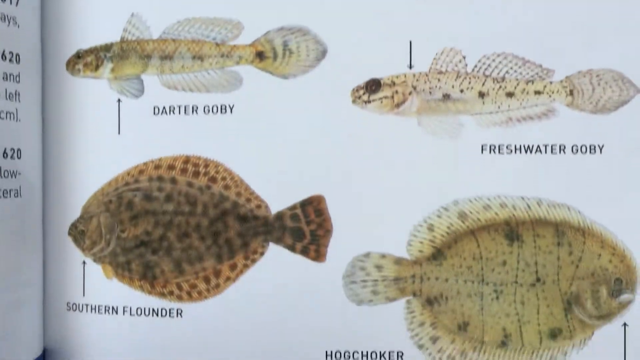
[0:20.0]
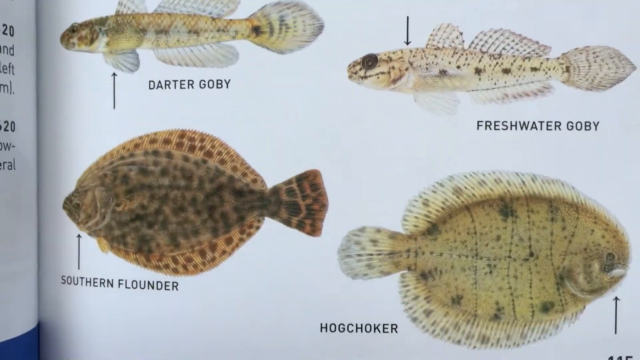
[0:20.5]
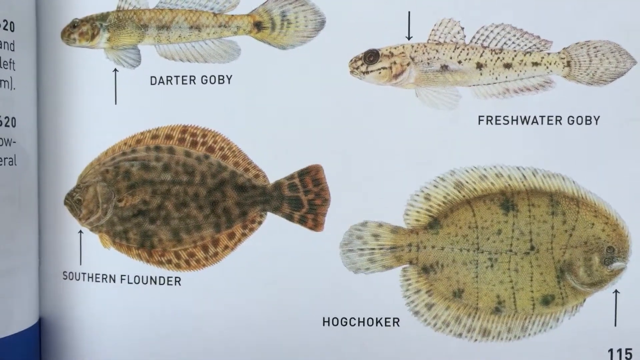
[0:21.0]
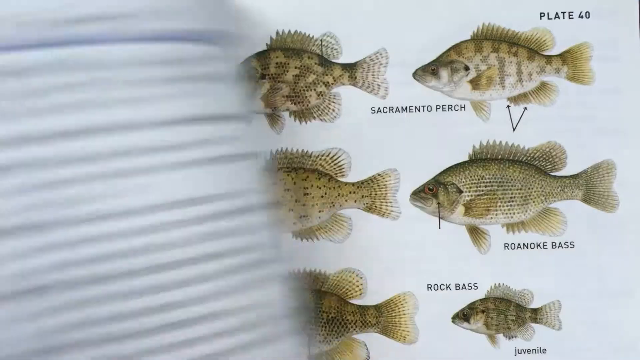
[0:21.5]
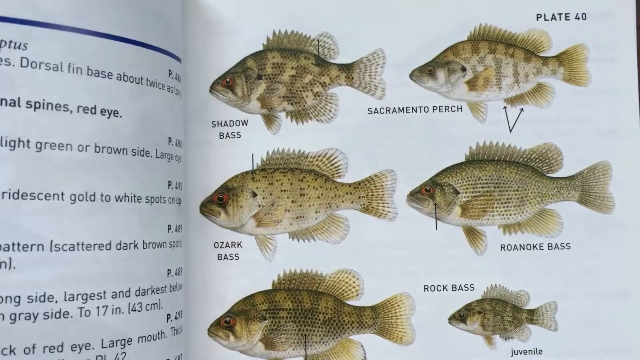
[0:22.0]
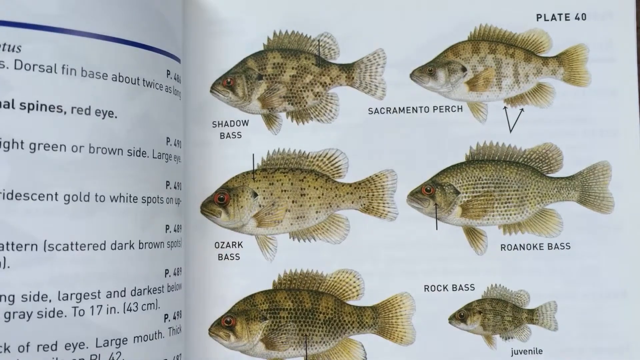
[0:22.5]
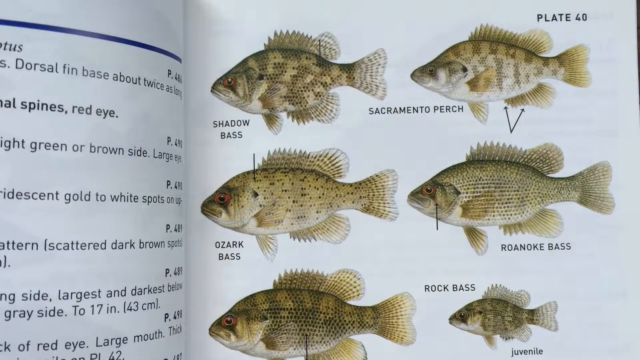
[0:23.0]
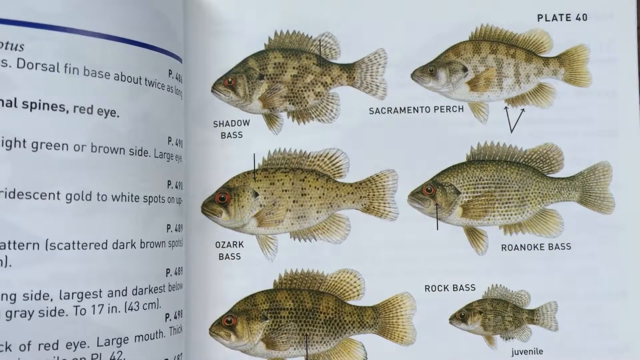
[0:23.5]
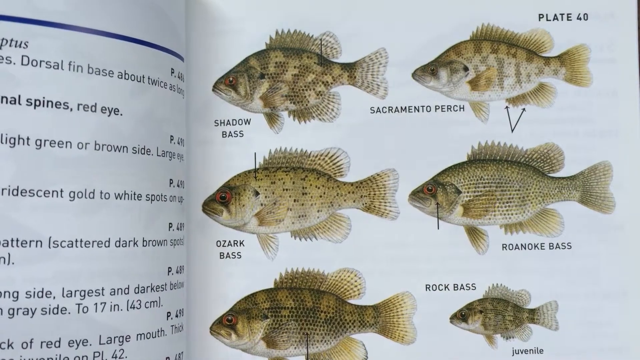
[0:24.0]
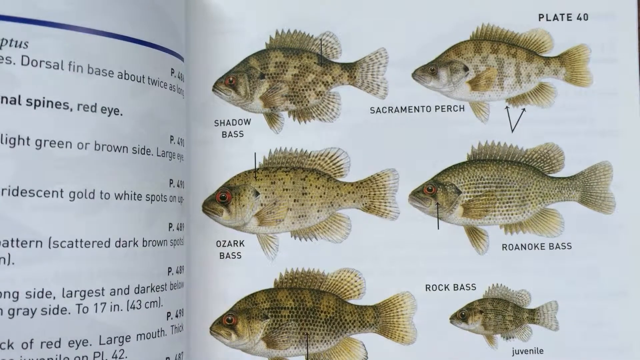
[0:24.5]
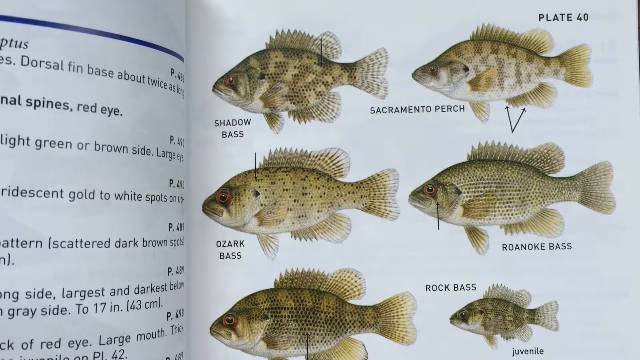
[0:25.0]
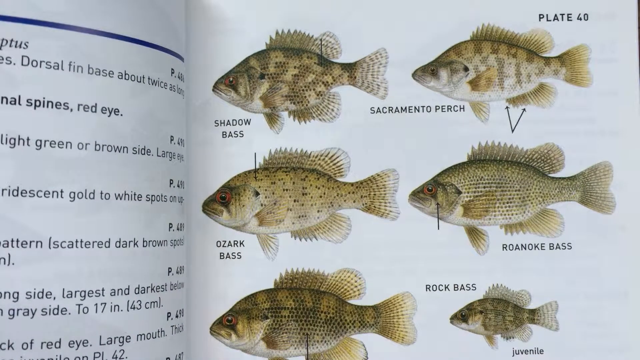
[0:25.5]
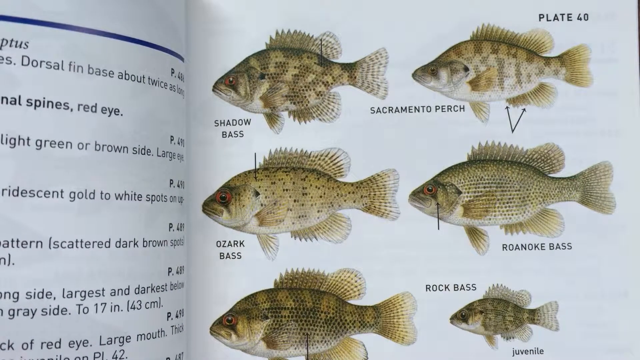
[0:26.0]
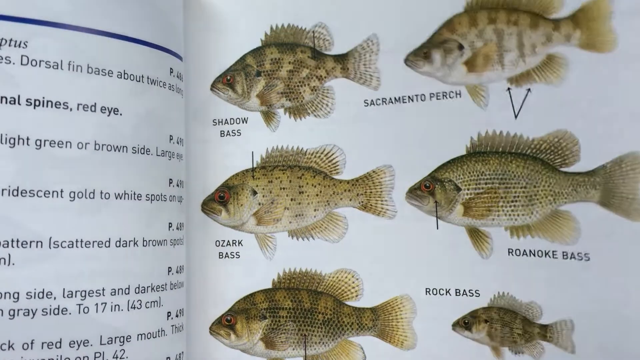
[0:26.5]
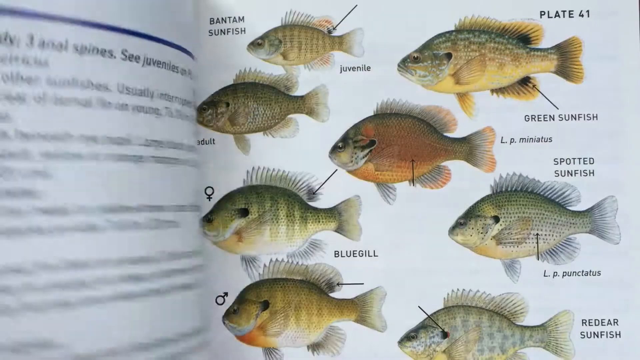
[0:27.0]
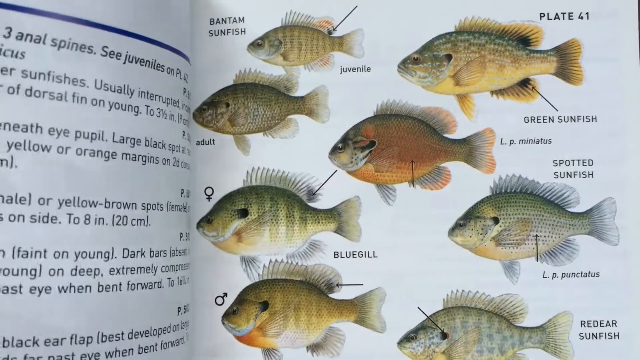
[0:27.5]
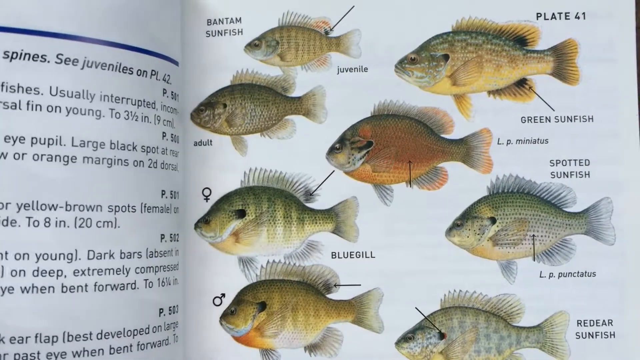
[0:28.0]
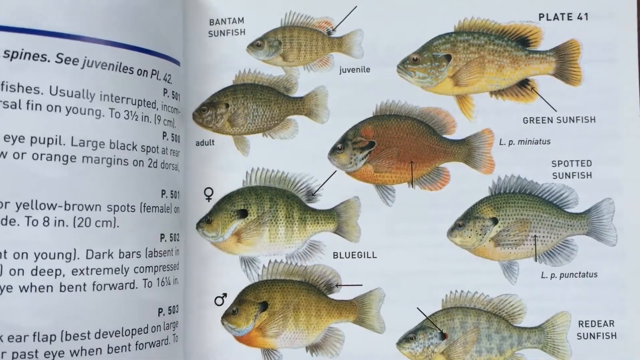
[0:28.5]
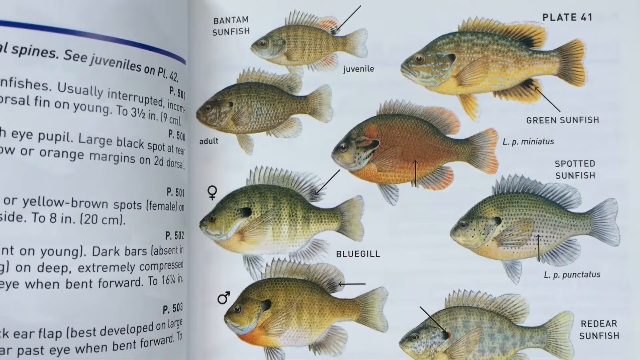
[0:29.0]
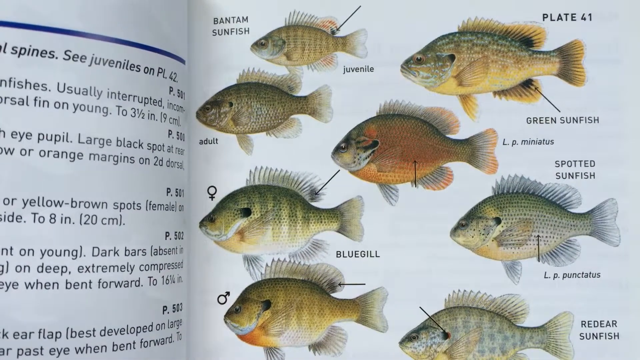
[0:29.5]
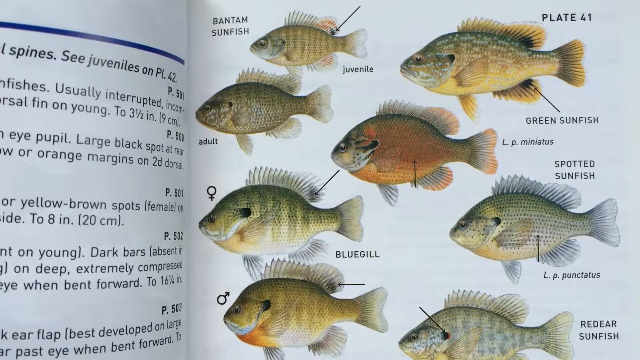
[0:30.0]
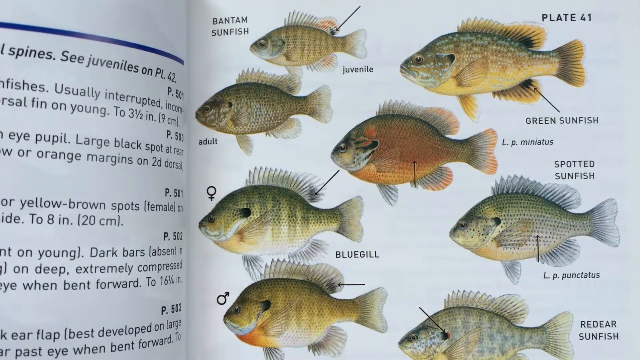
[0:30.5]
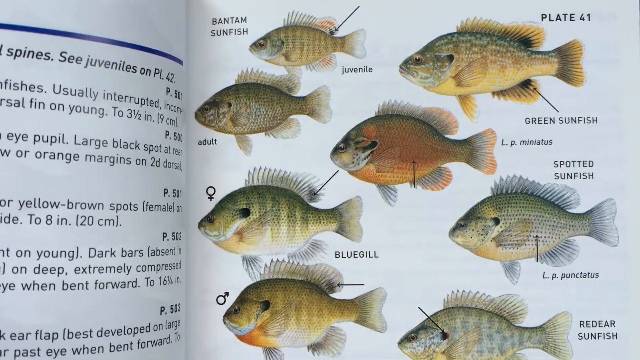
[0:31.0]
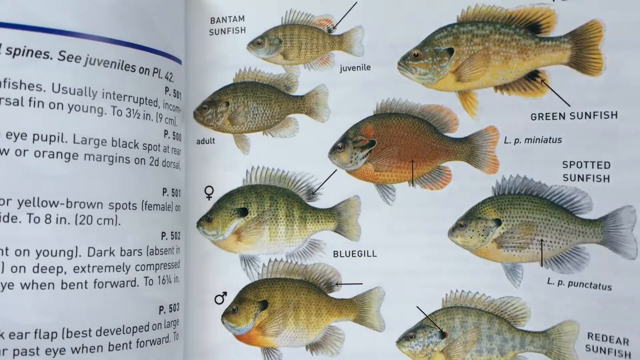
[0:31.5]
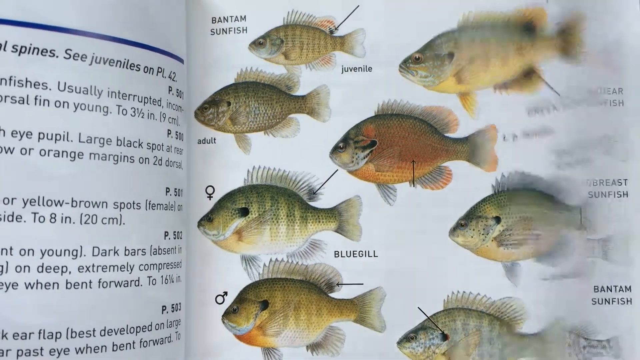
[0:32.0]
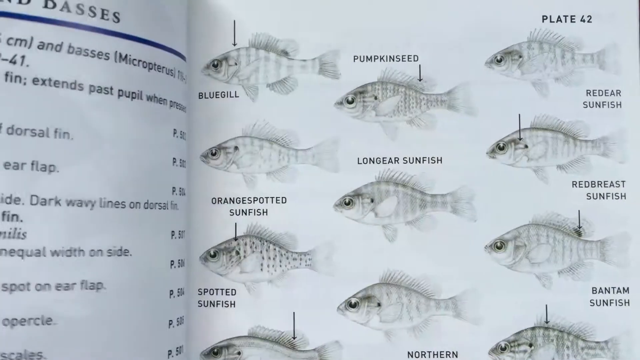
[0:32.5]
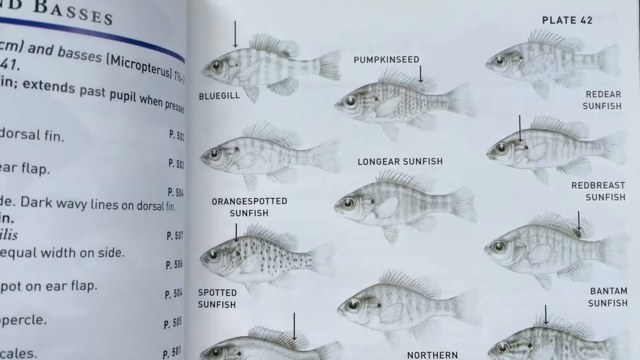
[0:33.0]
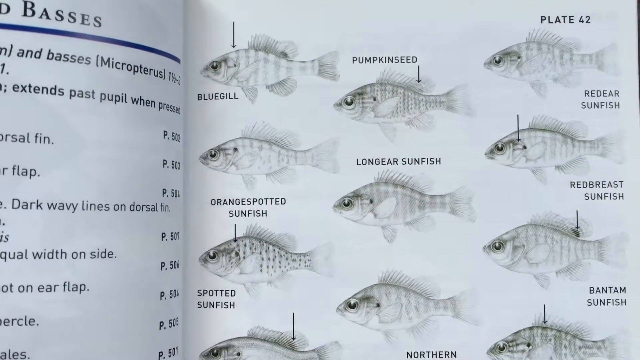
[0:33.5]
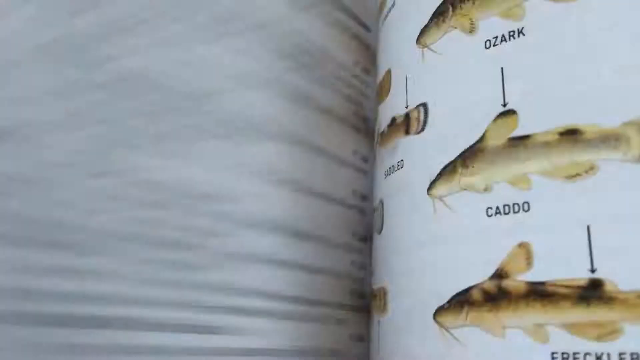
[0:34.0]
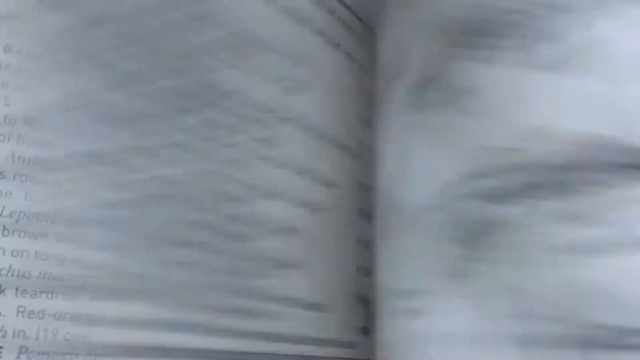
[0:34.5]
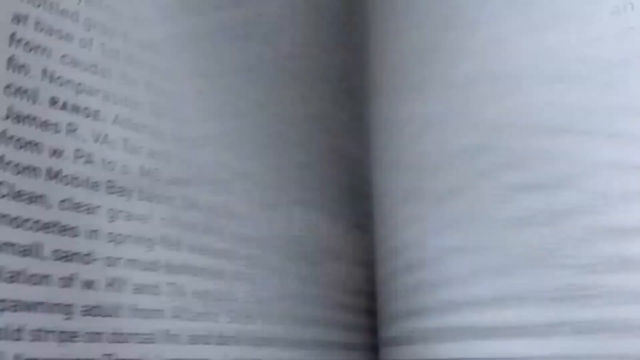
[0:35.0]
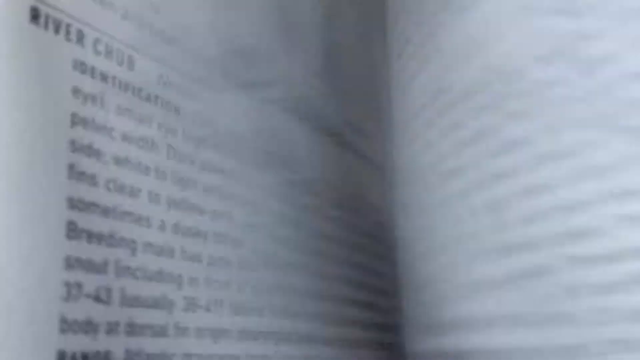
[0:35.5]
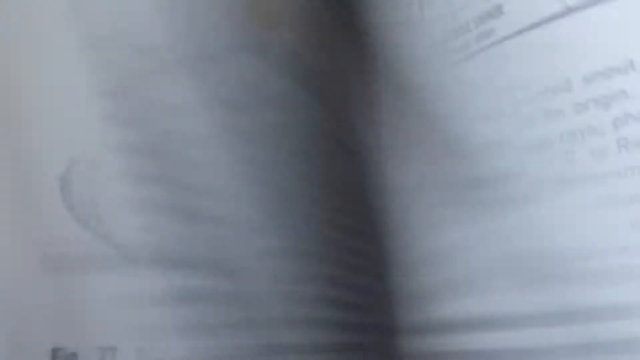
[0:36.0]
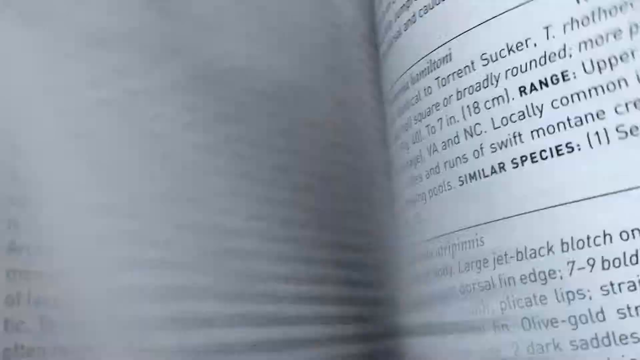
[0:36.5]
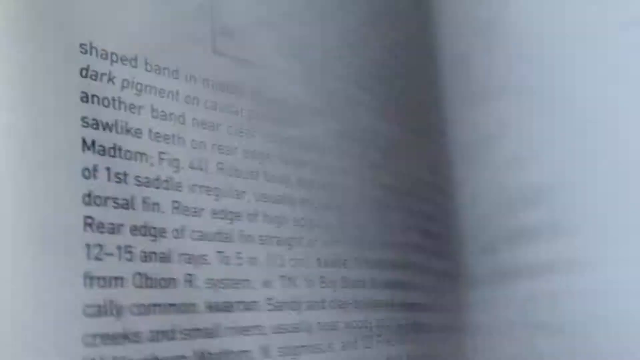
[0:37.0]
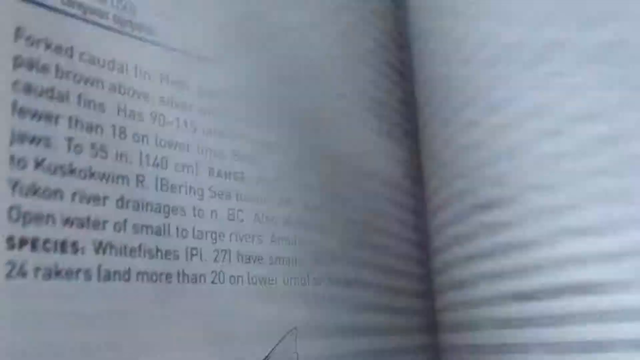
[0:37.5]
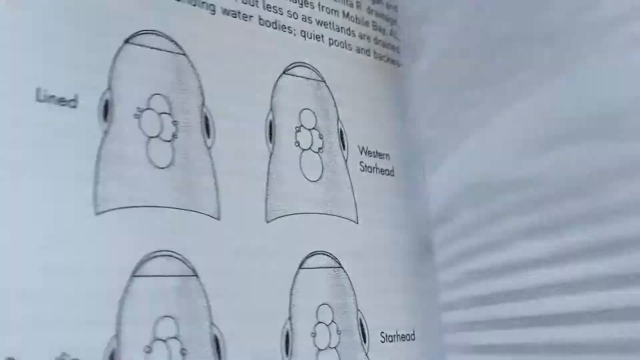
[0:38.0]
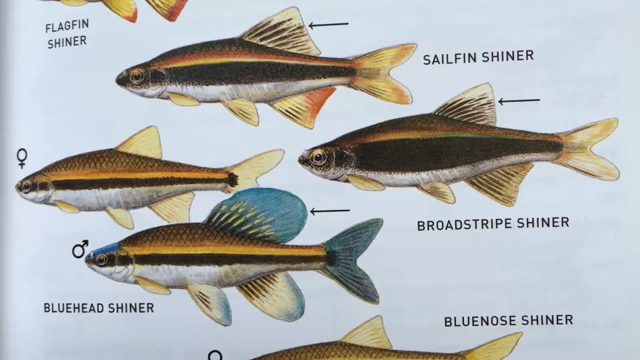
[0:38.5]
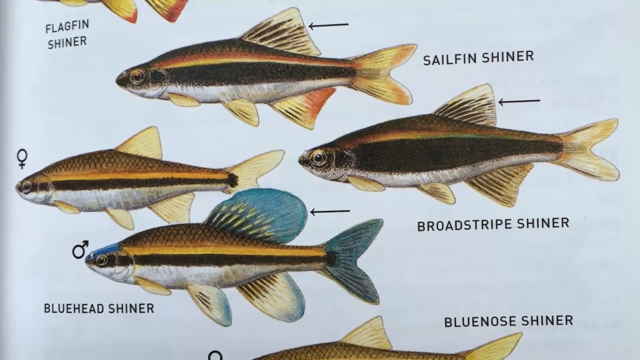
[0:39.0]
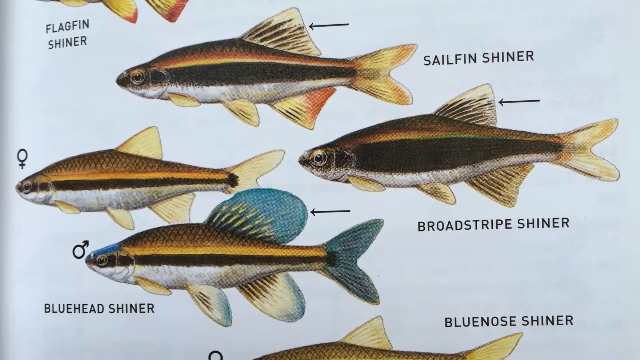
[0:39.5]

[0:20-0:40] A close-up shows images of four different types of fish: darter goby, freshwater goby, southern flounder and hogchoker. The person flips the page; on the left are descriptions of fish and on the right are different types of fish, including shadow bass, Sacramento perch, Ozark bass, Roanoke bass, rock bass and one whose name cannot be seen. Another page flip shows bantam sunfish in juvenile and adult form, green sunfish, bluegill, spotted sunfish and redear sunfish. The next page shows bluegill, pumpkinseed, redear sunfish, longear sunfish, orangespotted sunfish, spotted sunfish, redbreast sunfish, bantam sunfish and northern sunfish. The person then flips through the pages very fast, so nothing can be seen clearly, and stops at a page showing flagfin shiner, sailfin shiner, broadstripe shiner, bluehead shiner and bluenose shiner.